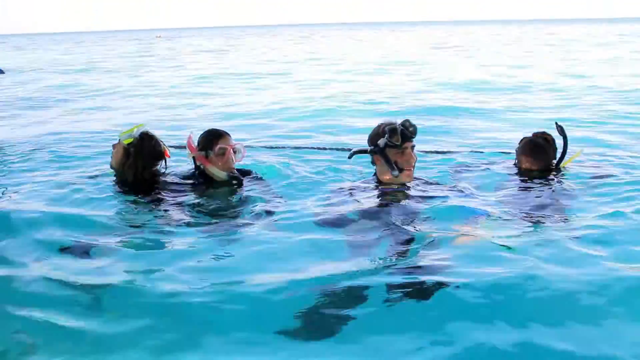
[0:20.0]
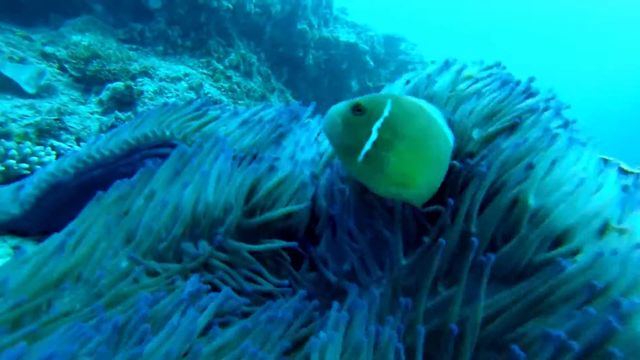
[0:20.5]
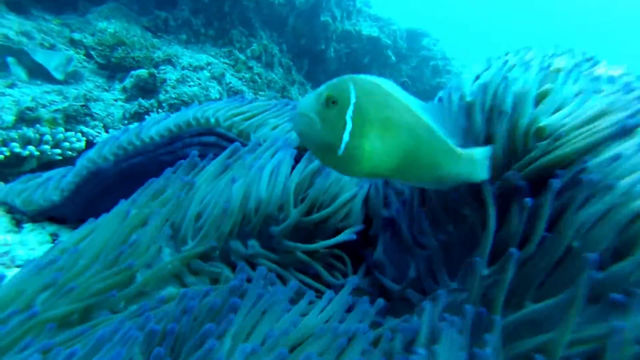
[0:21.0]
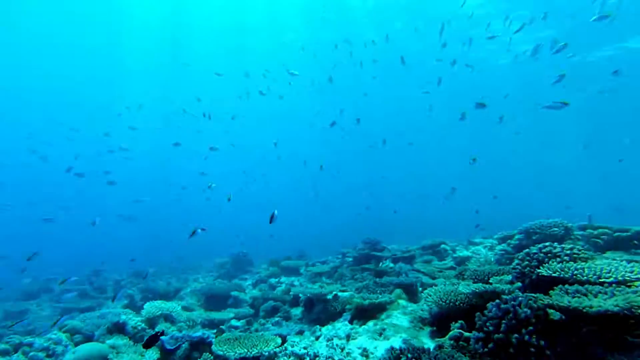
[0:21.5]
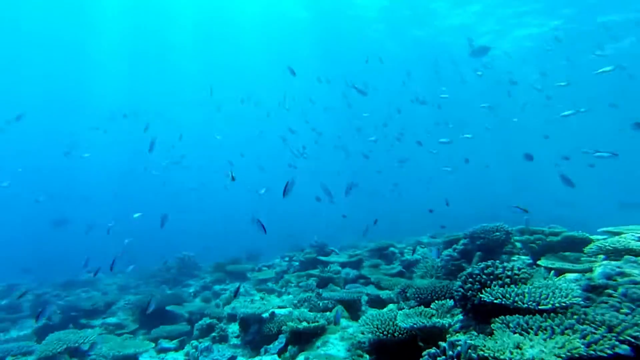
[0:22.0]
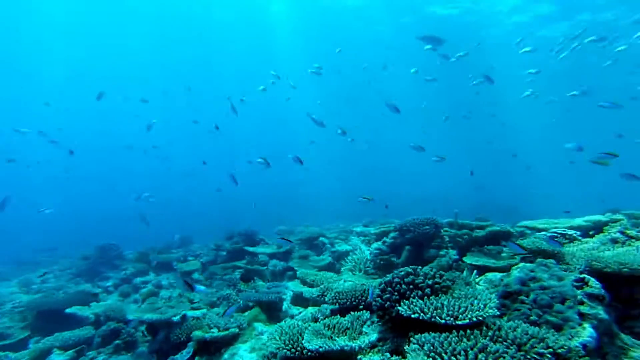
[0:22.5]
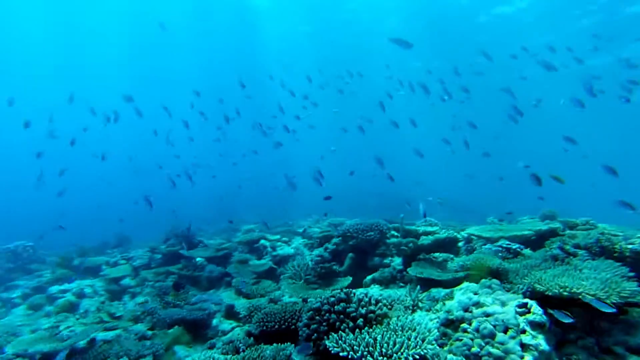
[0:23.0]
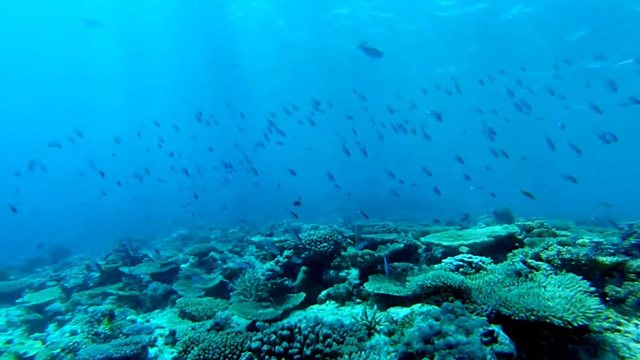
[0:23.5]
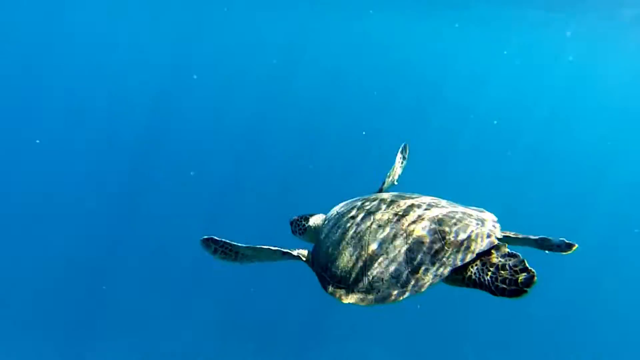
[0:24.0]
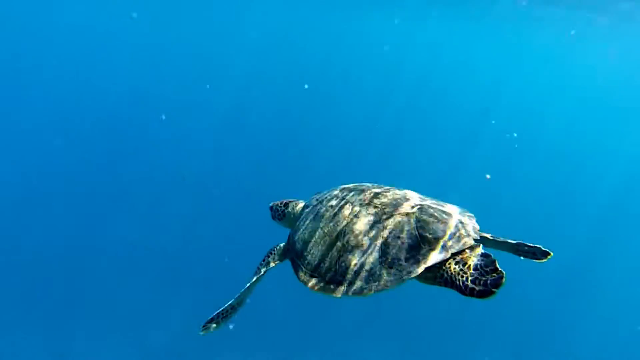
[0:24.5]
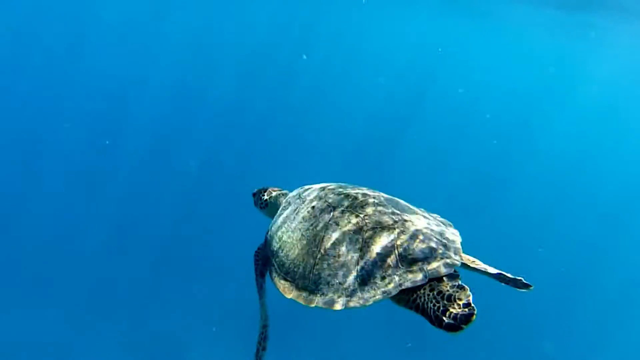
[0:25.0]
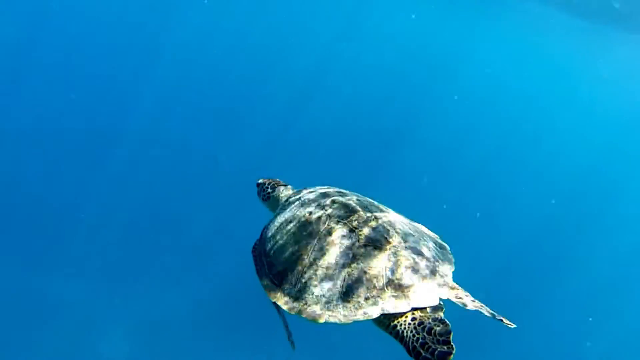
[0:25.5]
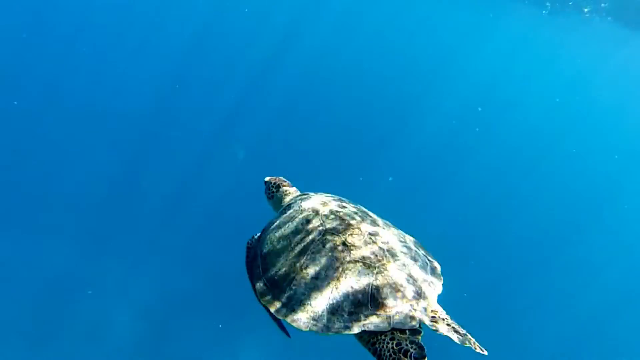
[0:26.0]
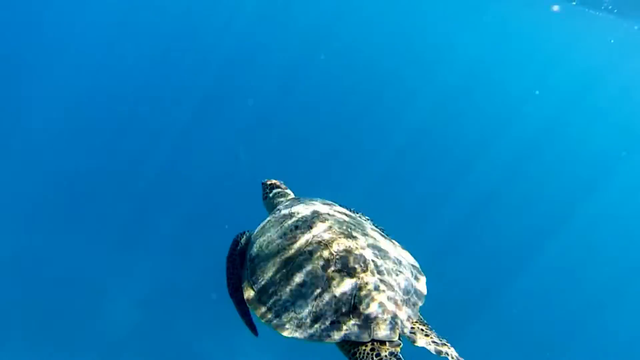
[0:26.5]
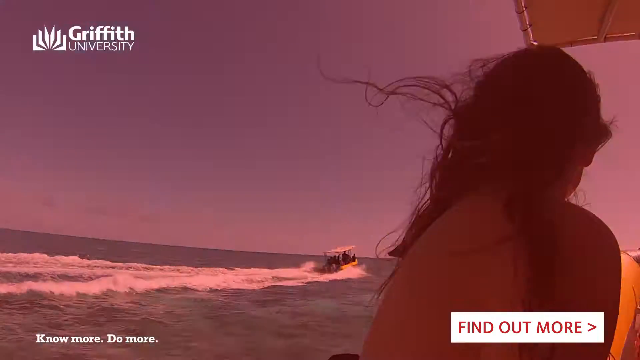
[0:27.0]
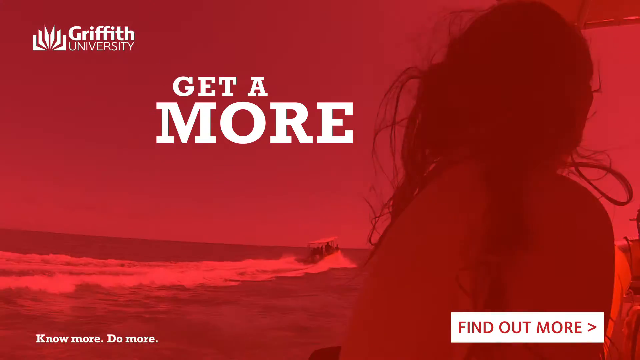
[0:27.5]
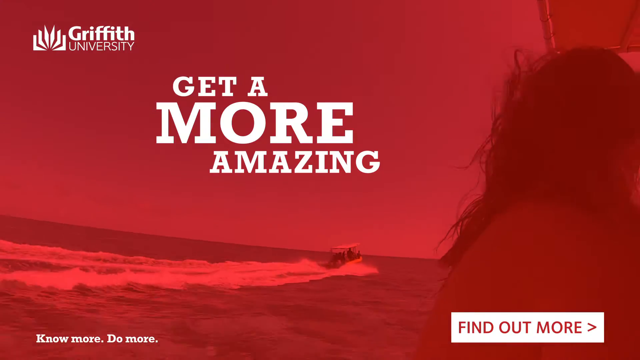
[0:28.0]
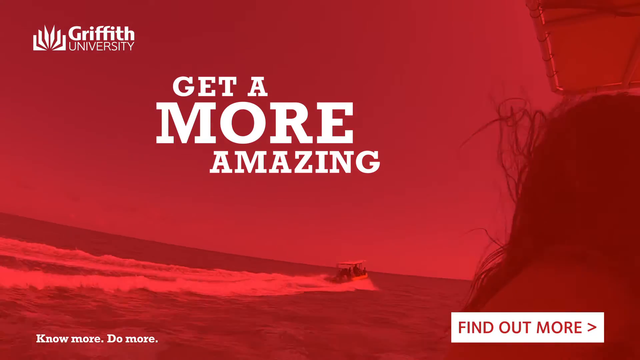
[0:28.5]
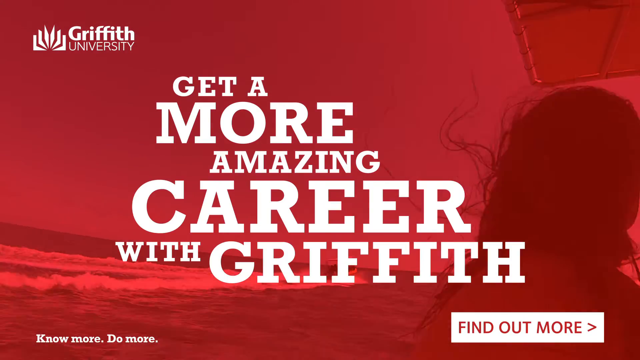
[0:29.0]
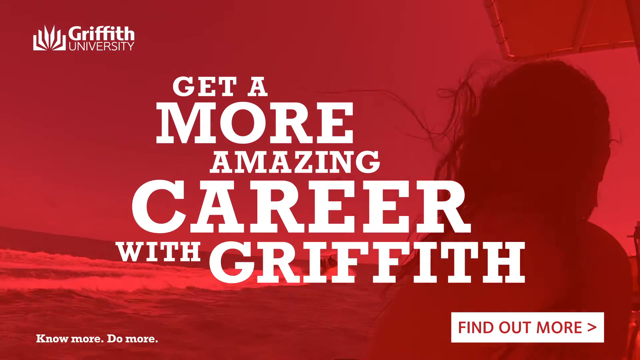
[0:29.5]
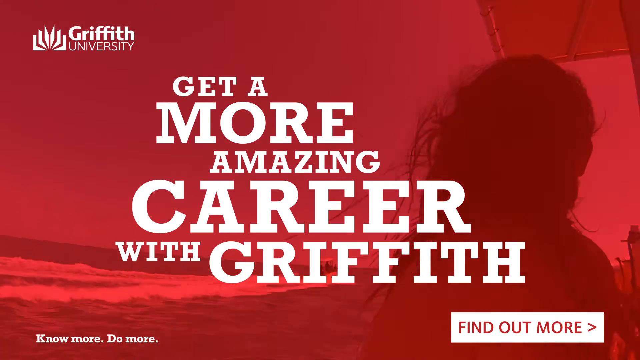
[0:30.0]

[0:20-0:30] Four students swim in the ocean inside a black outlined area. As that shot ends, the camera zooms into some kind of fish, possibly a goldfish, by a sea anemone. The fish moves from looking away from the camera toward the right-hand side and kind of flips its tail, then kind of looks at the camera. Next, a large school of small fish almost spurts and darts to the right and toward the bottom, almost in unison. Then a sea turtle slowly swims upward, flapping its fins about two times.